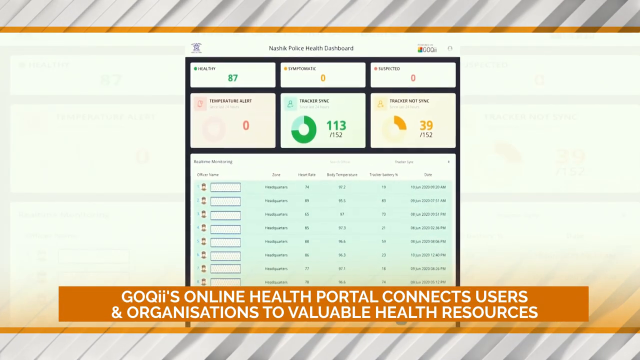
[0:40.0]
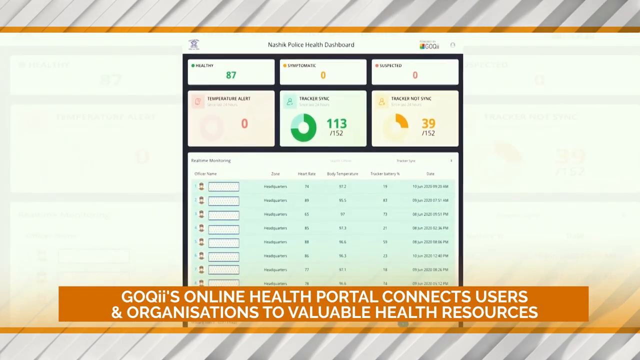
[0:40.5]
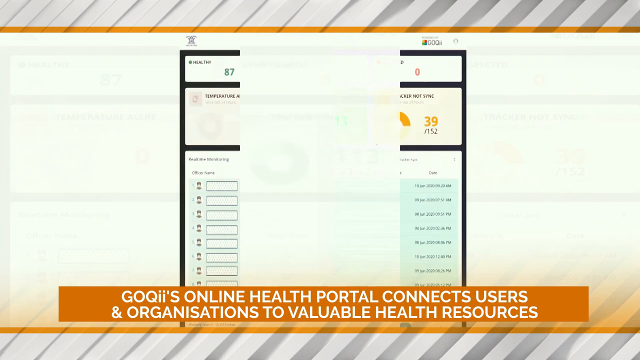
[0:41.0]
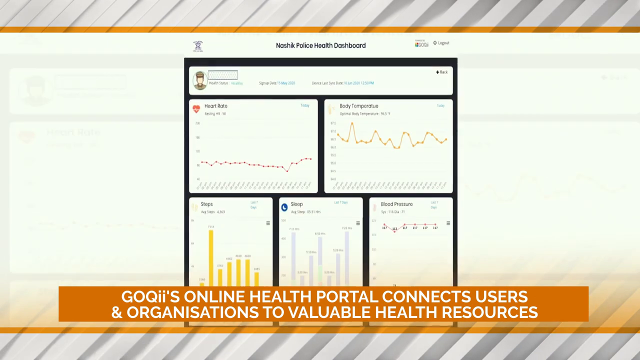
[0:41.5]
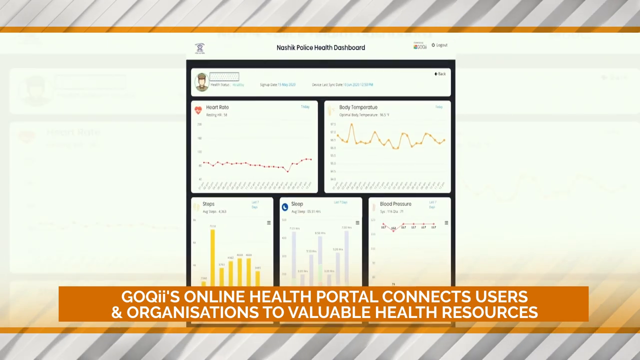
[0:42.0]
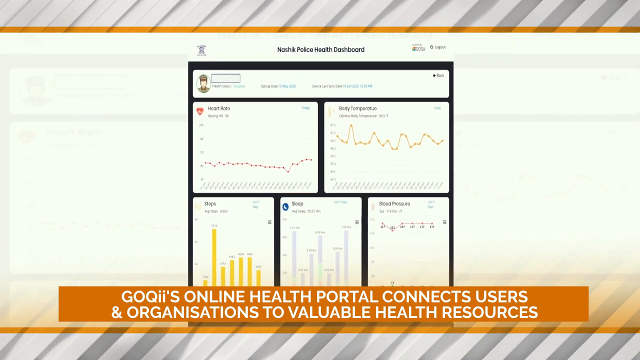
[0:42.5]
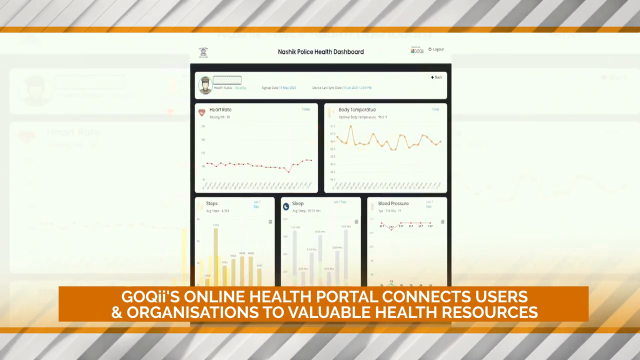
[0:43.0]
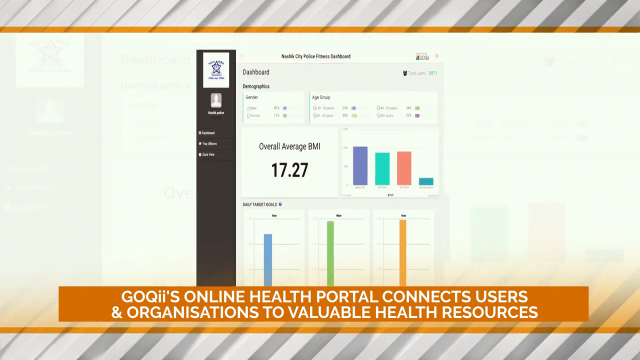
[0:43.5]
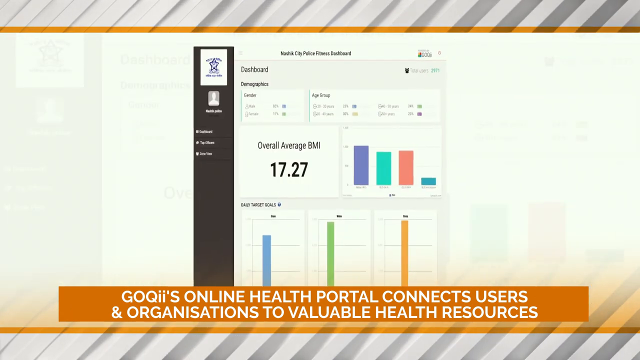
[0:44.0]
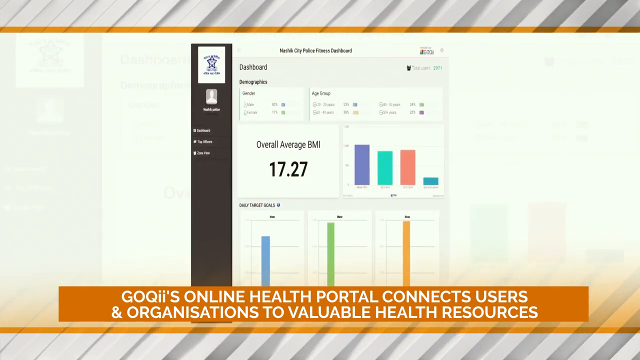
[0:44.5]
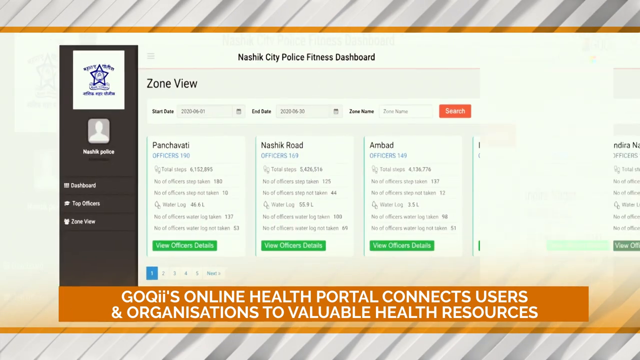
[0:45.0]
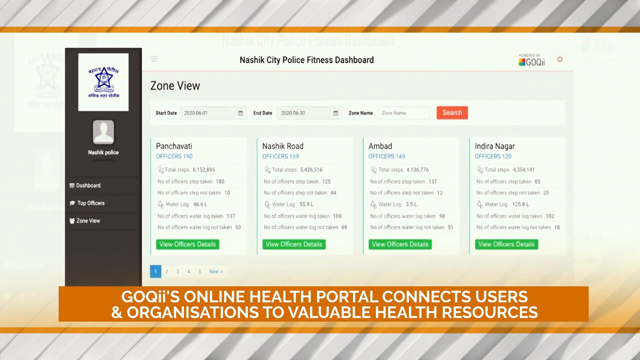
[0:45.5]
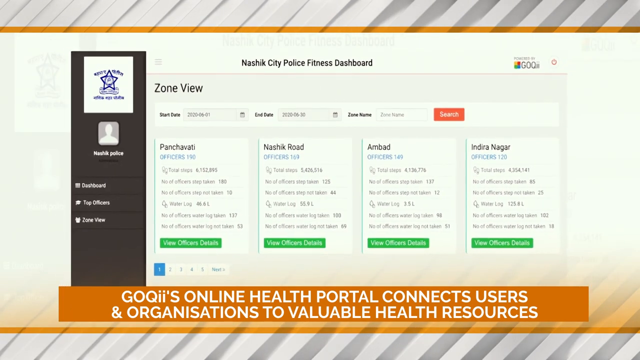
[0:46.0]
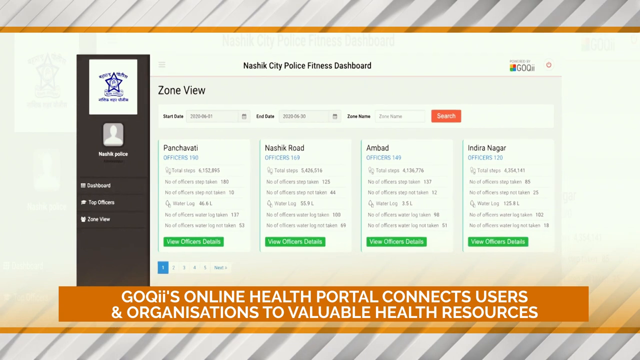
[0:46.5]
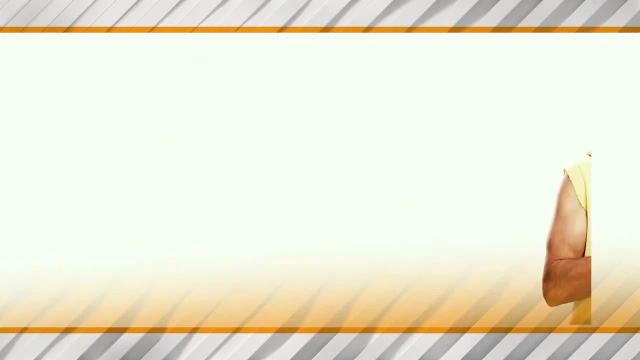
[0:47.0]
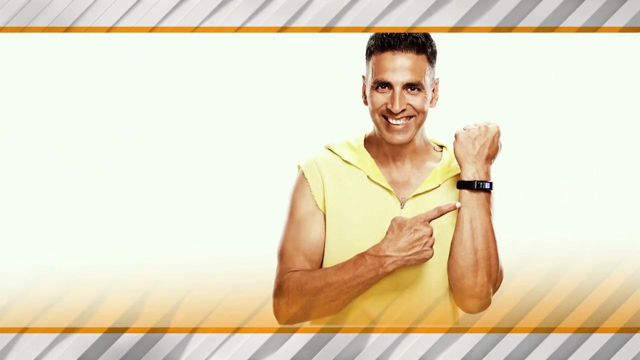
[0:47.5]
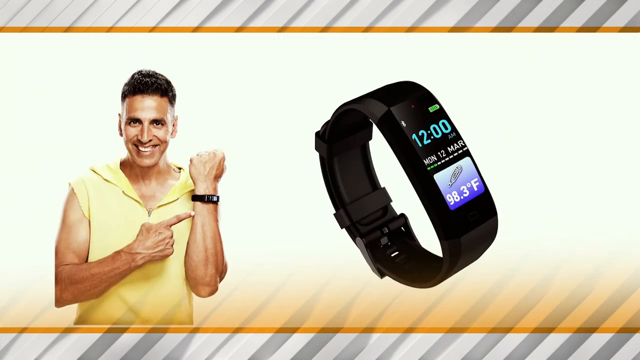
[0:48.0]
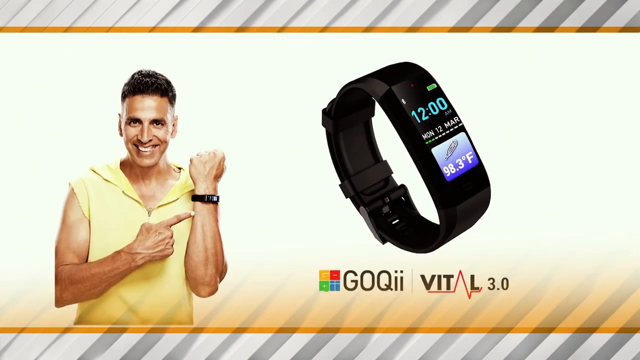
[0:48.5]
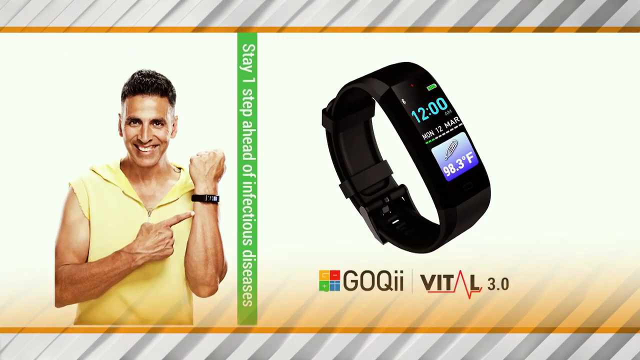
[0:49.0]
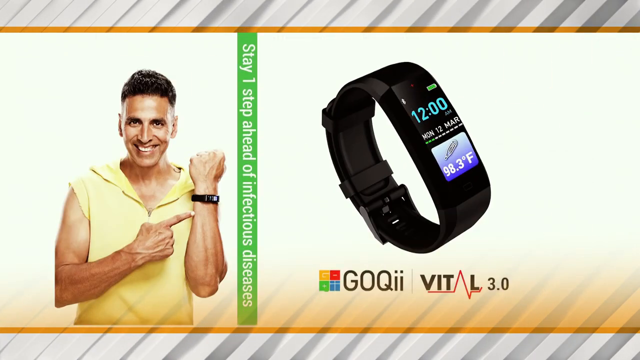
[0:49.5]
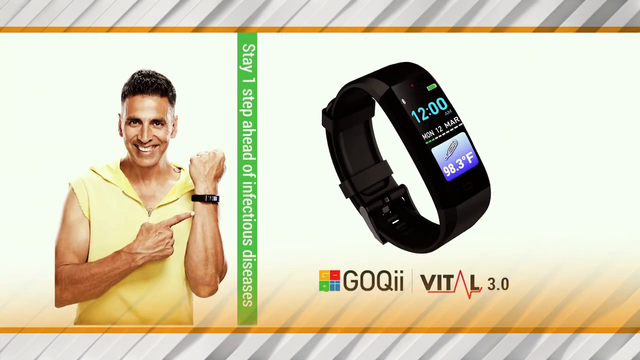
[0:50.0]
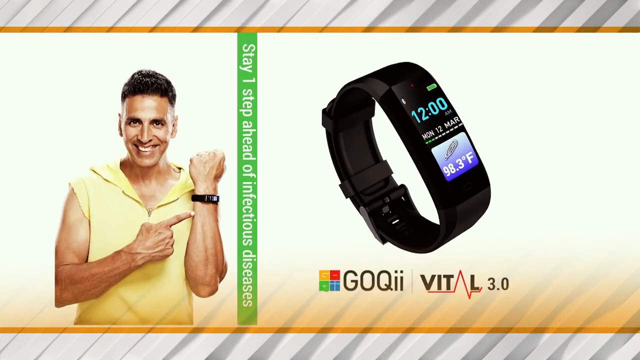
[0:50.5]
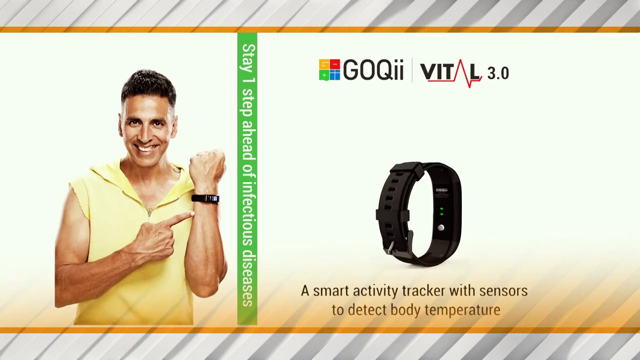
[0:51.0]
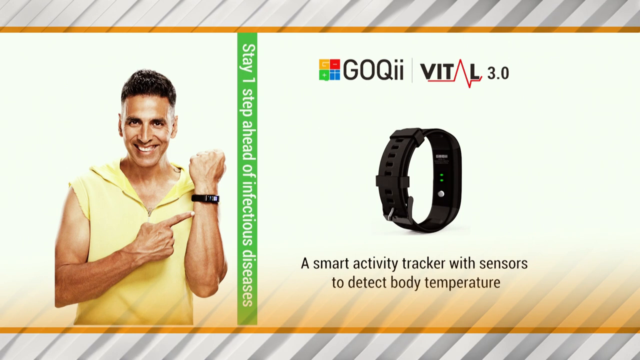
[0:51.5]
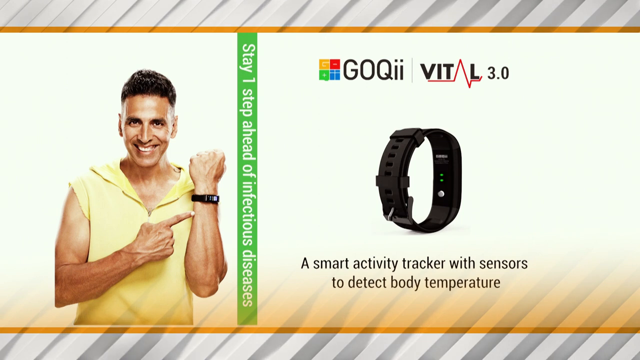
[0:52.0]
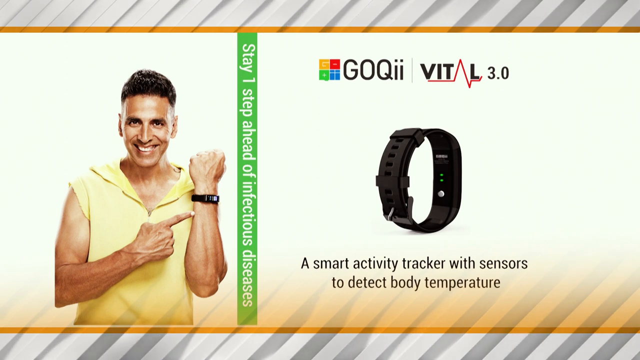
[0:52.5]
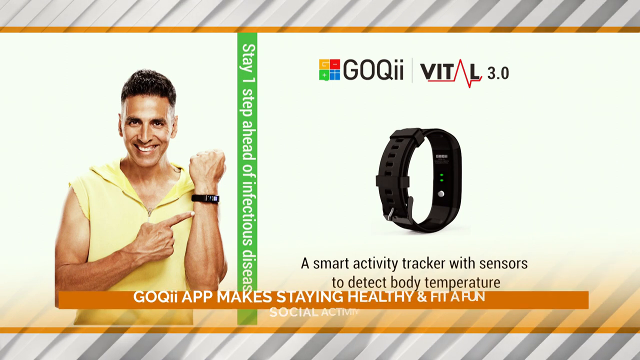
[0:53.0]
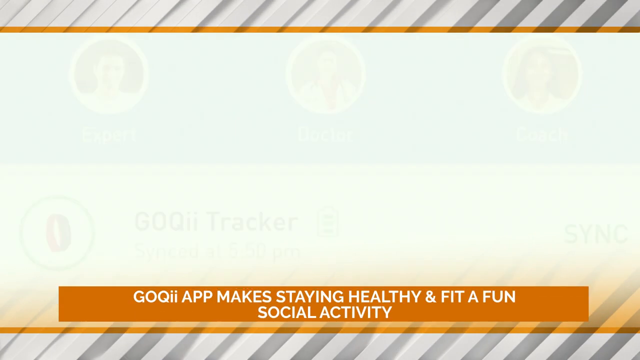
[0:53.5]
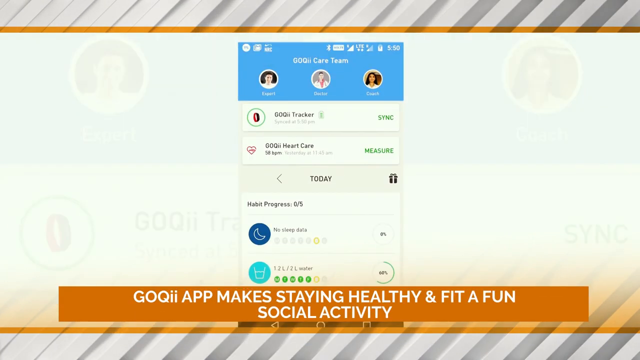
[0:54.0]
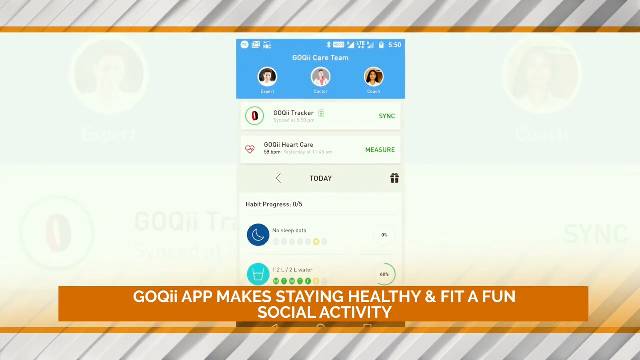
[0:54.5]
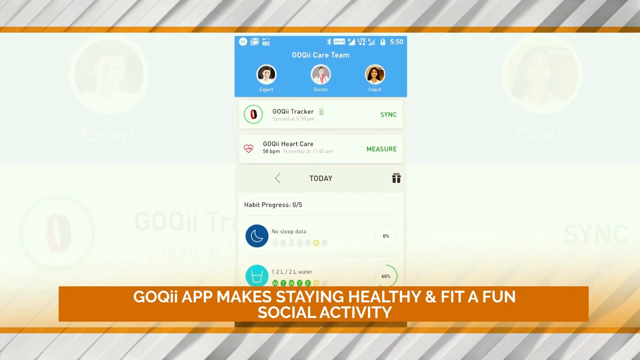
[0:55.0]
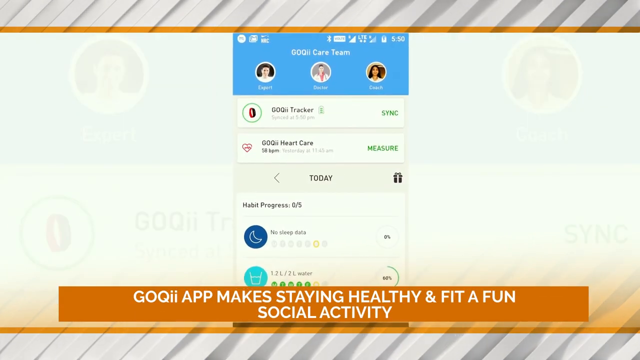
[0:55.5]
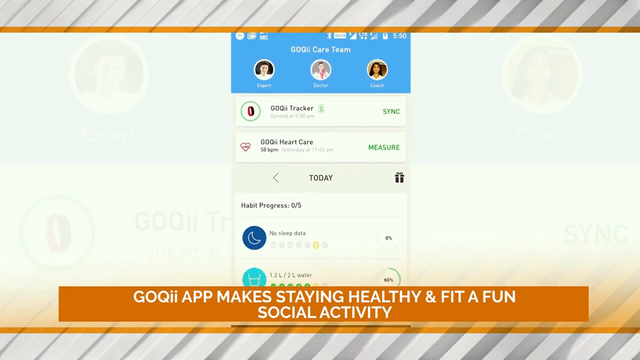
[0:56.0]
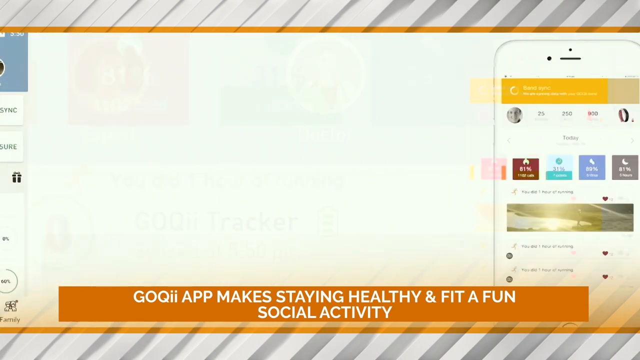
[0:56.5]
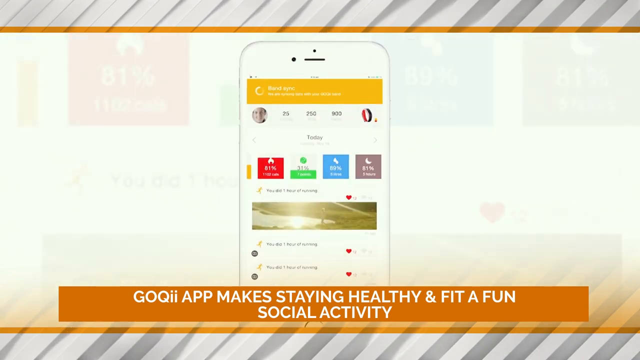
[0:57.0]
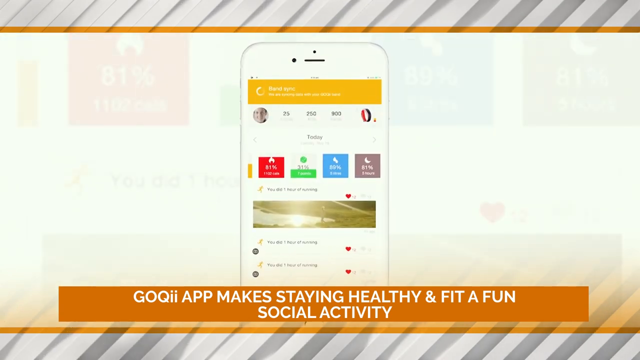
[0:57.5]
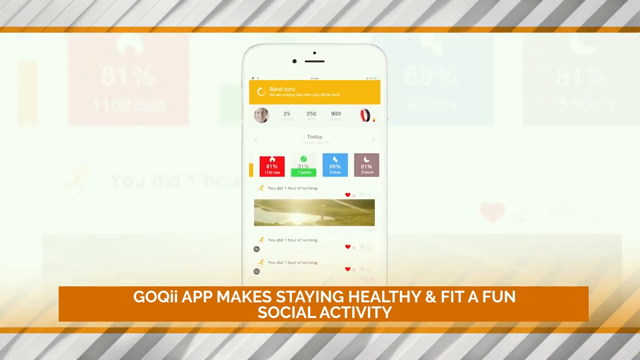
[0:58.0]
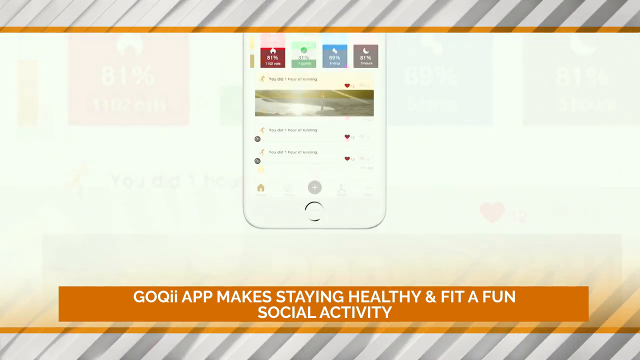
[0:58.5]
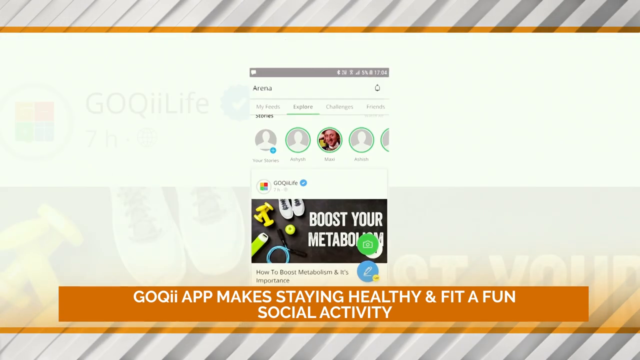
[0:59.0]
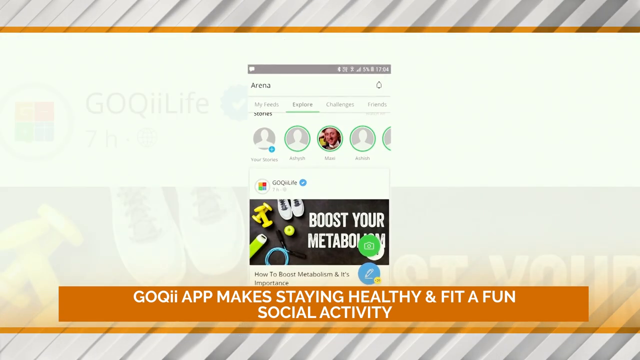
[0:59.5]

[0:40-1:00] The ad presents the GOQII smartwatch, a Smart Vital health monitoring system priced at 5,999 rupees. The man talking about it is Sumit Lakhotia from the Times Network. Its features appear: measuring body temperature, counting steps and giving heart notifications. An online health portal follows, which connects users and organizations to valuable health resources. Some small, blurry text is hard to read, mentioning something about a tracker, "tracker not synced" and "healthy". A body temperature graph goes up and down, and bar charts show blood pressure and sleep. A dashboard shows "overall average BMI 17.27." Then a "Nashik City Police Fitness Dashboard" appears, listing "Panchavadi, officers 190," "Nashik Road, officers 169," "Ambad, officers 149" and "Indiranagar, officers 120," giving figures for groups of officers rather than one person.